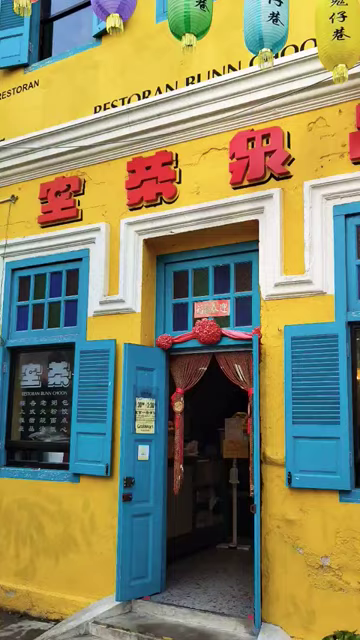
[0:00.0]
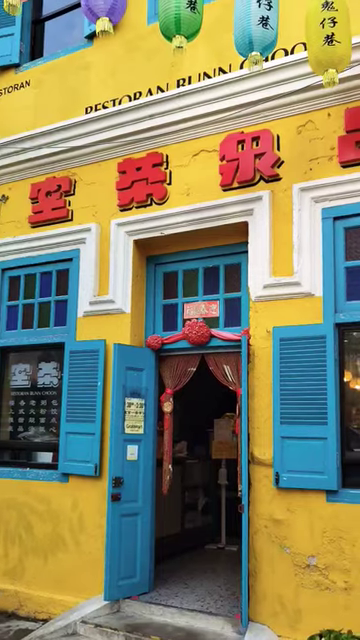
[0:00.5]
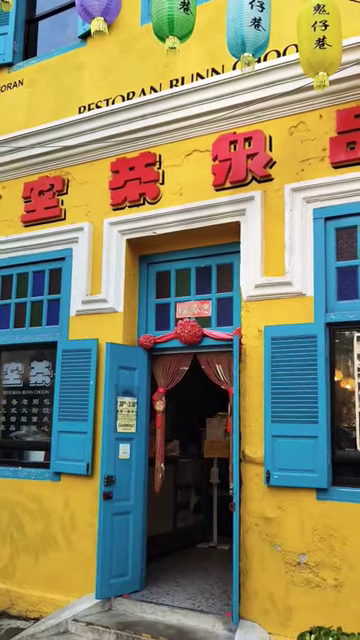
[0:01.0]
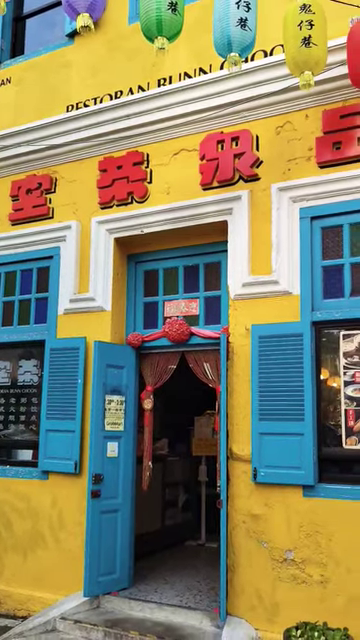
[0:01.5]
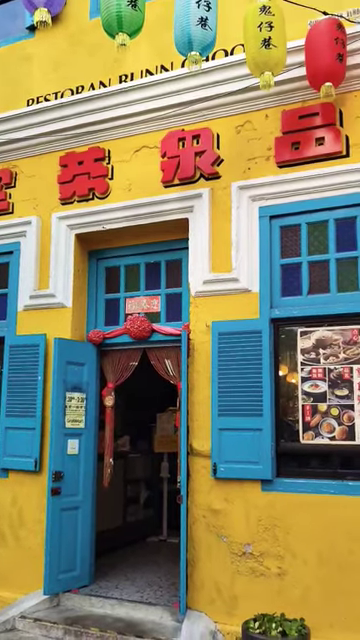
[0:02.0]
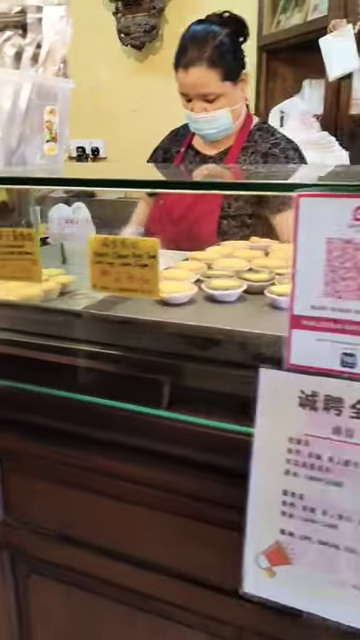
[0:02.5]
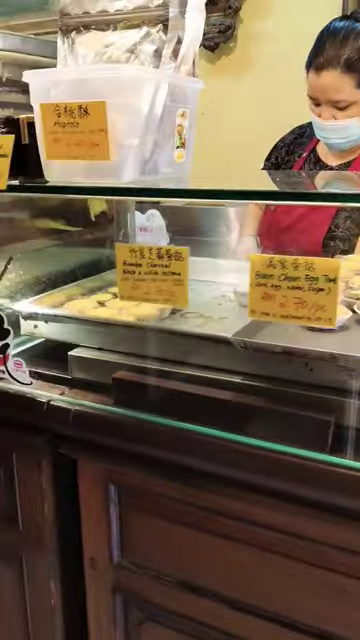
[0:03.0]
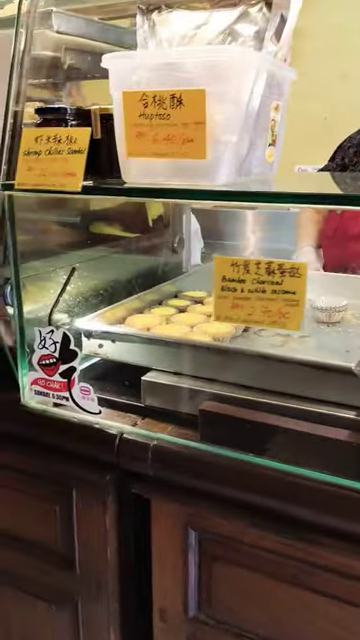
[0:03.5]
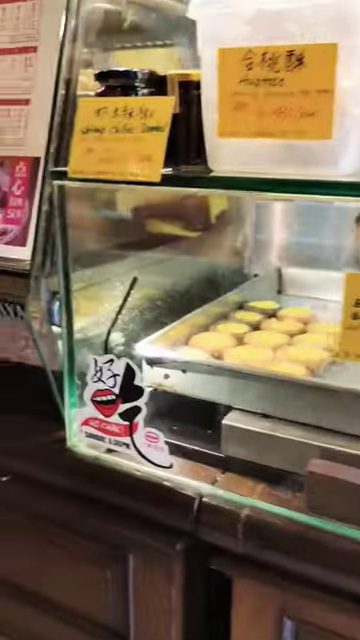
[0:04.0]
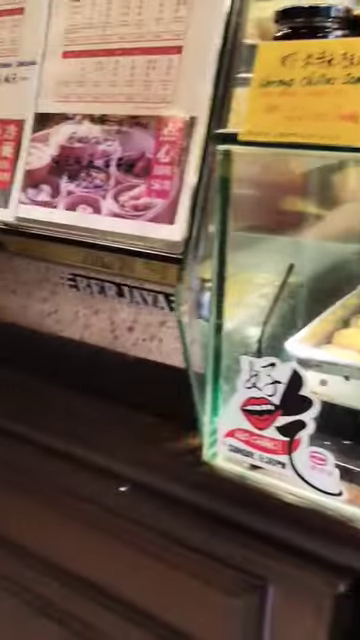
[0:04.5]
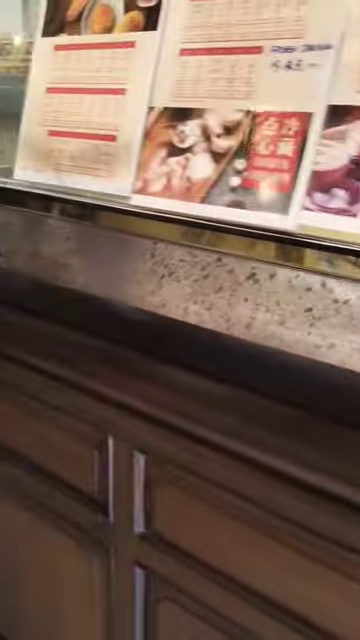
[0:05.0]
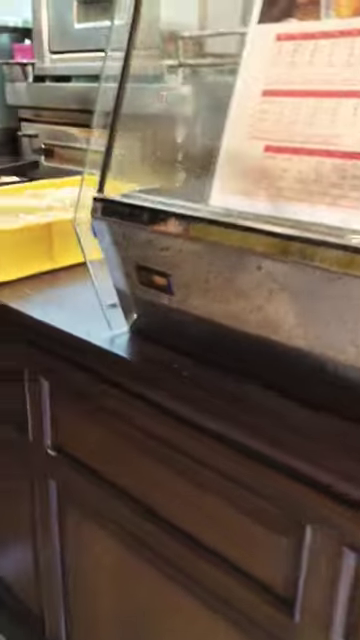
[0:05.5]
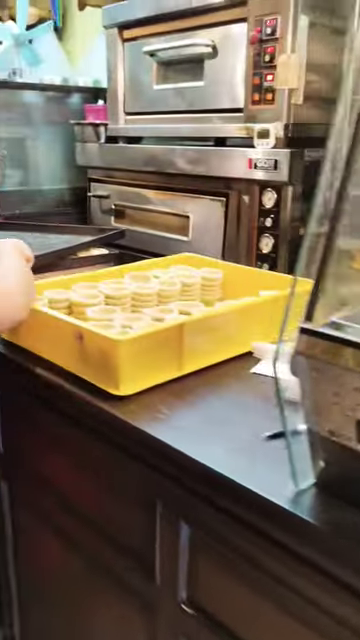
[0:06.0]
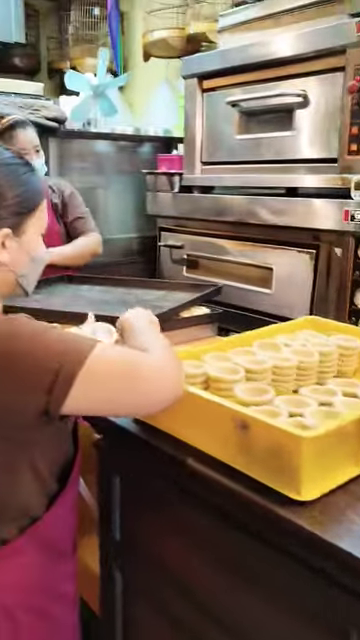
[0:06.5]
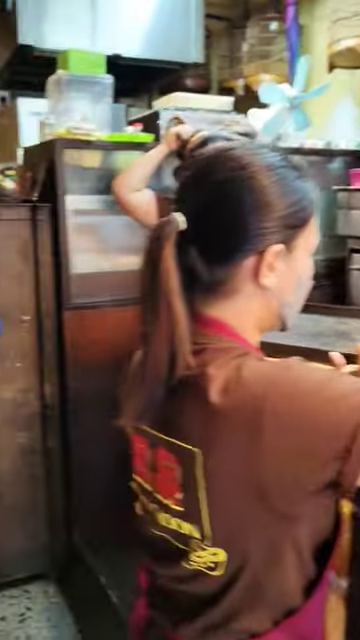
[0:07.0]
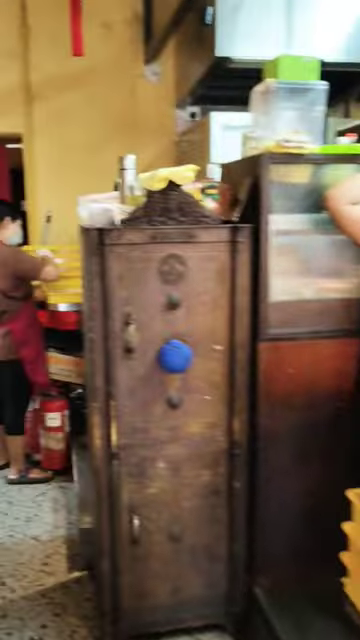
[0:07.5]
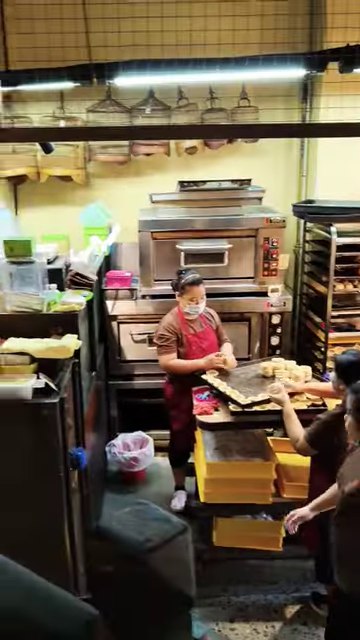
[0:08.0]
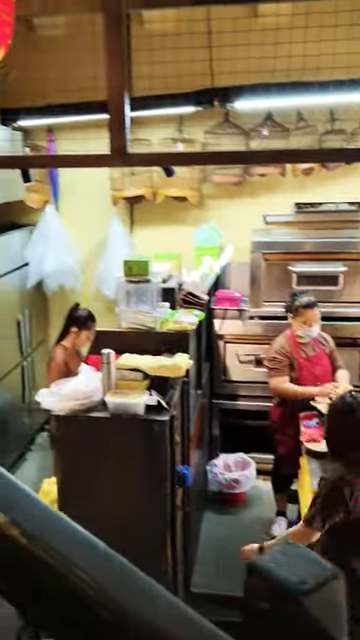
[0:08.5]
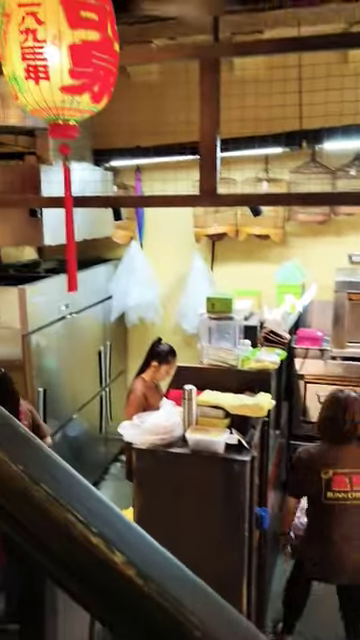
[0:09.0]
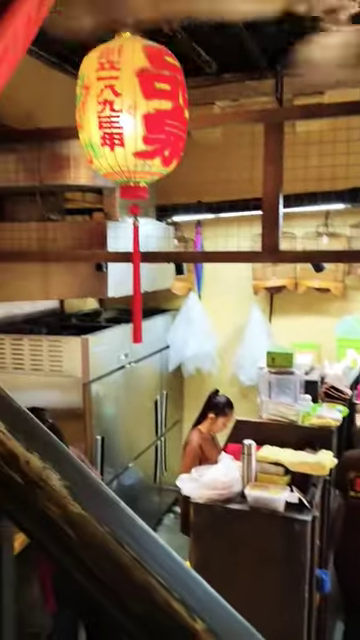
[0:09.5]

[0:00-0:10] A storefront somewhere in Asia, possibly China, is shown from outside. There appears to be Chinese writing on the top of the storefront, and above that are some words in English that cannot be made out because they are partly blocked by the building's architecture. Below the sign is a blue double door, which is opened up. The video then goes inside the store, which appears to be some type of pastry shop. Women at different workstations are rolling dough and making it into different types of pastries.